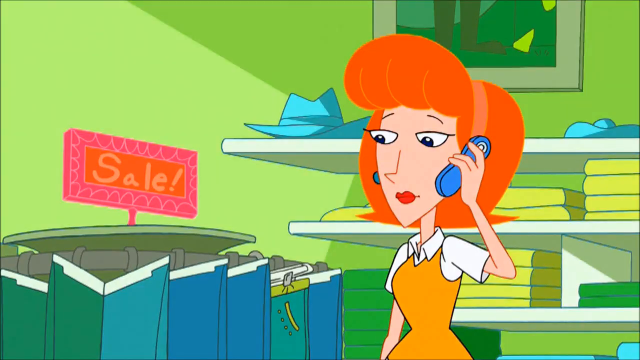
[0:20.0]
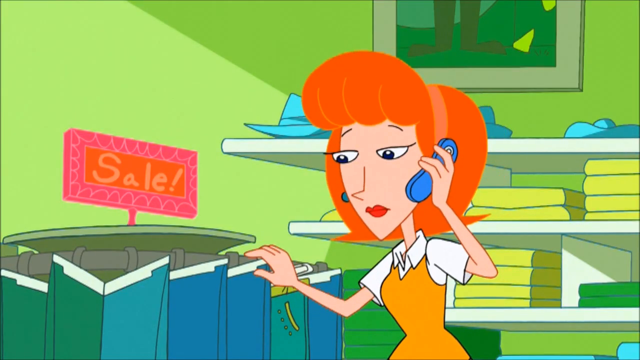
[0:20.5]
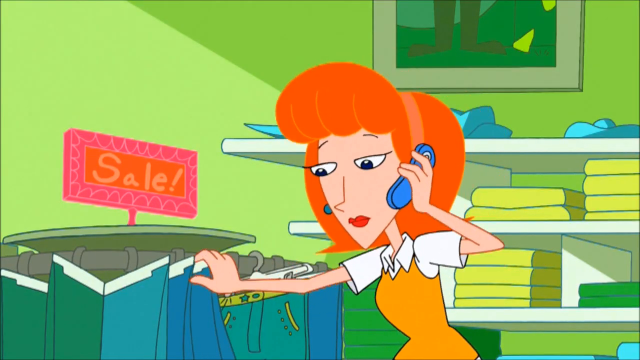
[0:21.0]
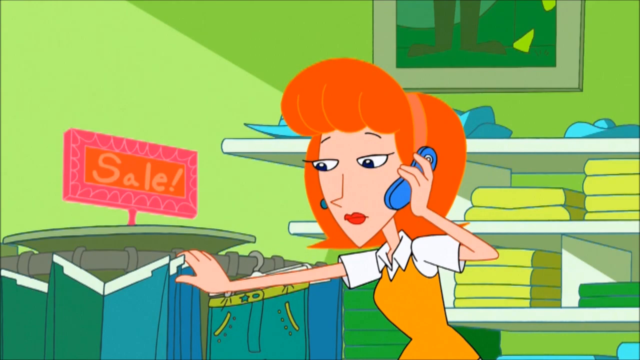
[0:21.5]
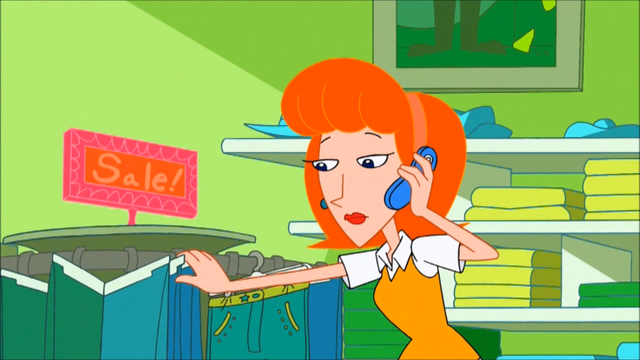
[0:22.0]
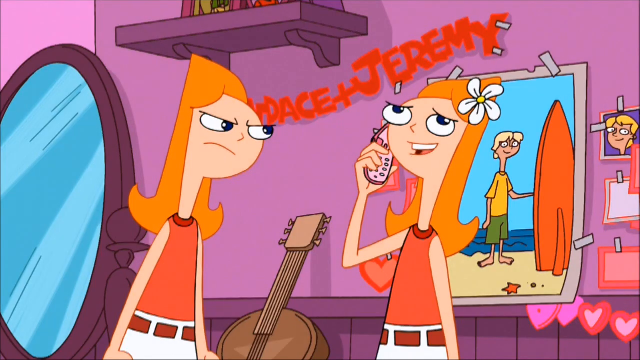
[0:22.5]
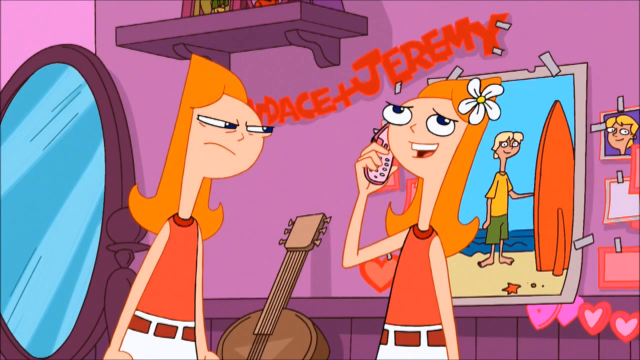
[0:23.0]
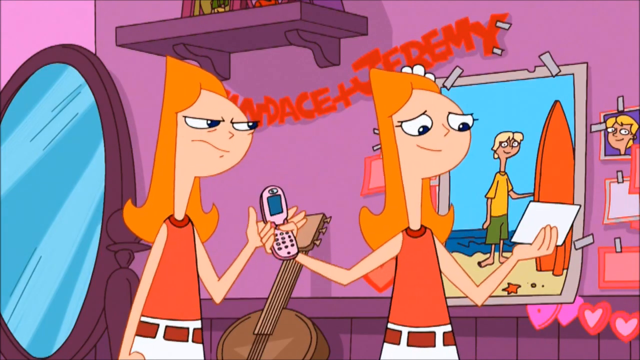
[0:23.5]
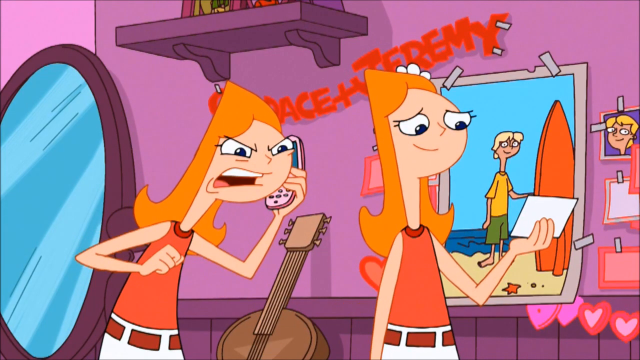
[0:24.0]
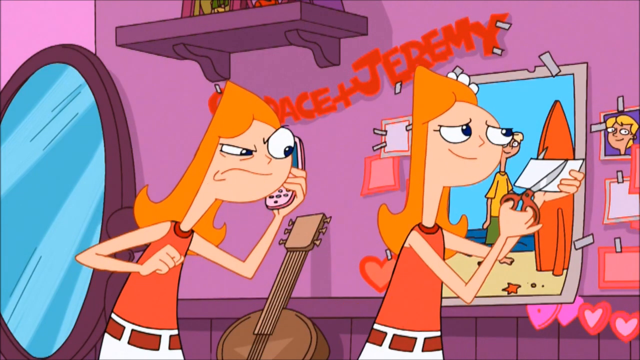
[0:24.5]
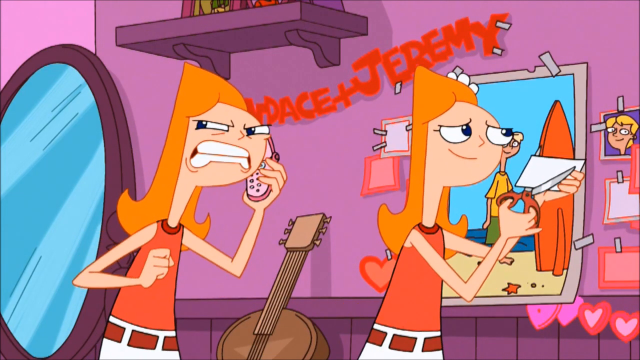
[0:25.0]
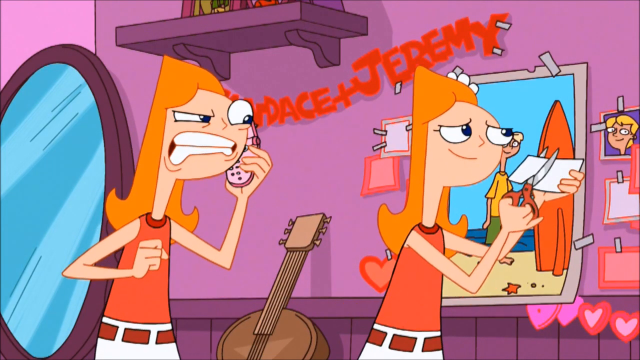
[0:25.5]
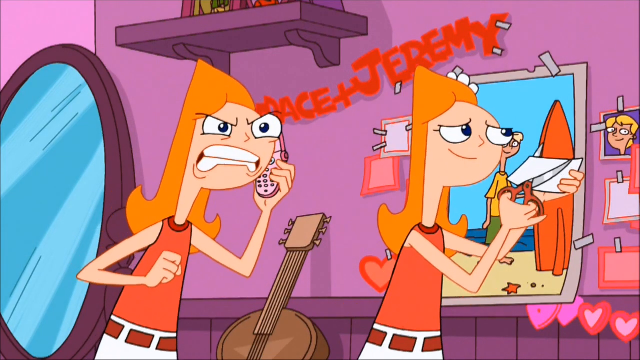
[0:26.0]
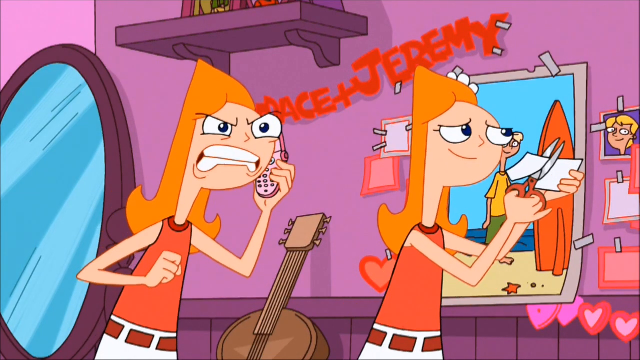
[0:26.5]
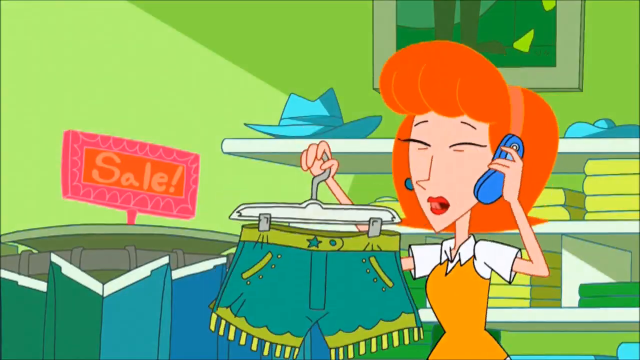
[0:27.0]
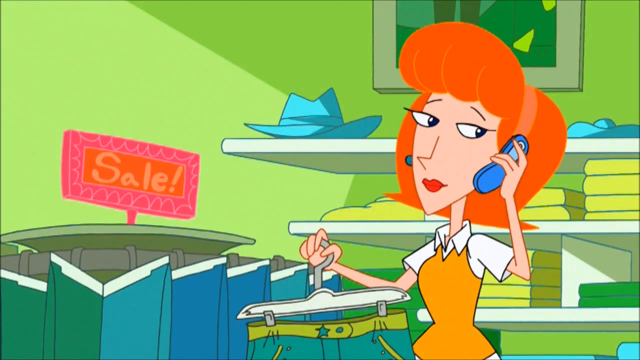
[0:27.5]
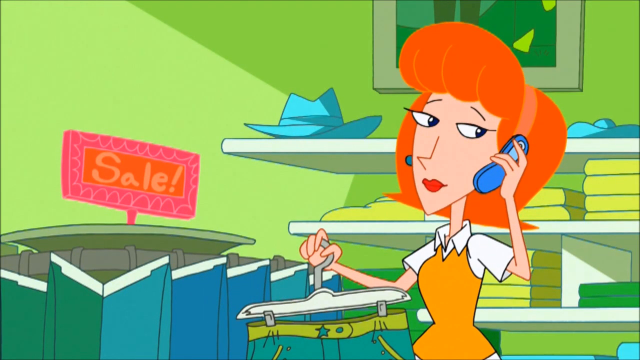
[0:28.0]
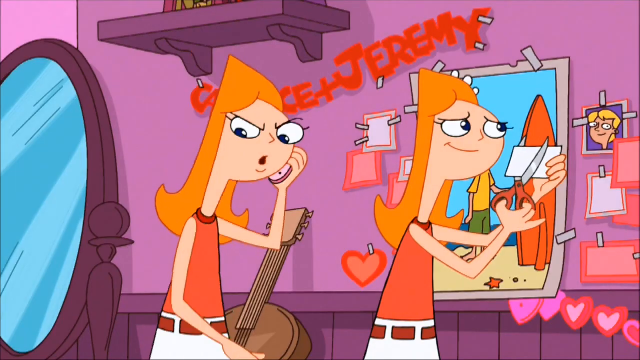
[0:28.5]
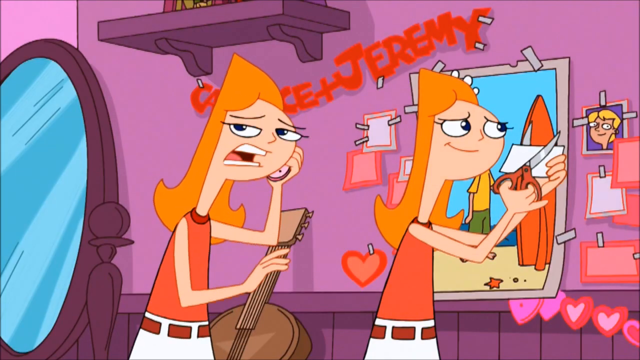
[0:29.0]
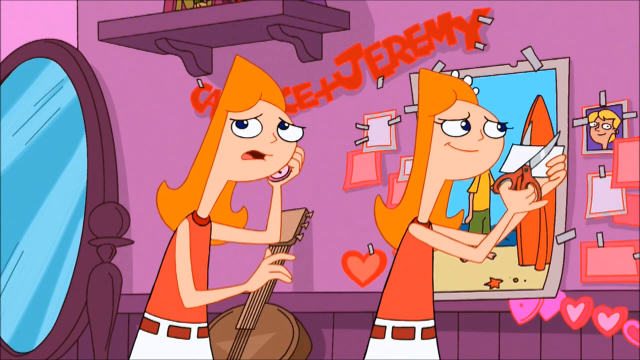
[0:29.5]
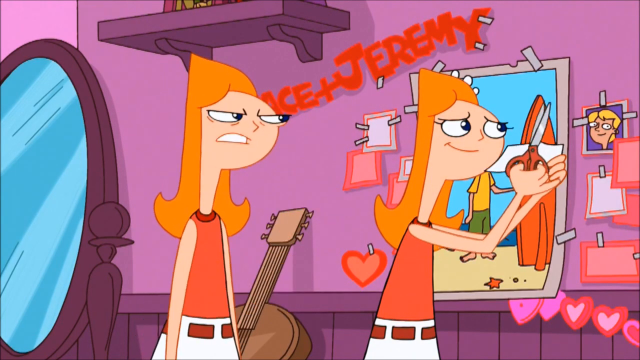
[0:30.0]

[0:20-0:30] A big for sale sign and a rack of clothes appear, with a woman standing in front of them whose identity is not clear at first. She has a large hairdo in a reddish-orange shade and is talking on a blue phone, with some blue hats in the background. She looks through the clothes, including jeans, while talking to the young girl who is madly in love with her son. The girl hands the phone back to her mother, and her mother finds out that the two are now engaged and are going to be married in the next week or so. The mother is very disapproving, and the daughter looks away dreamily.